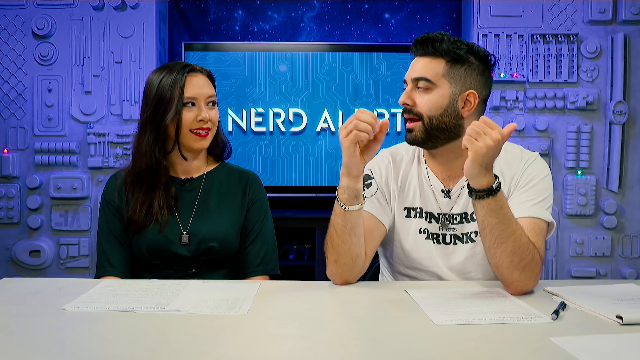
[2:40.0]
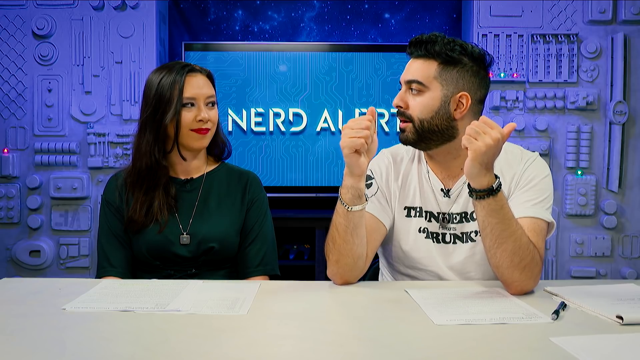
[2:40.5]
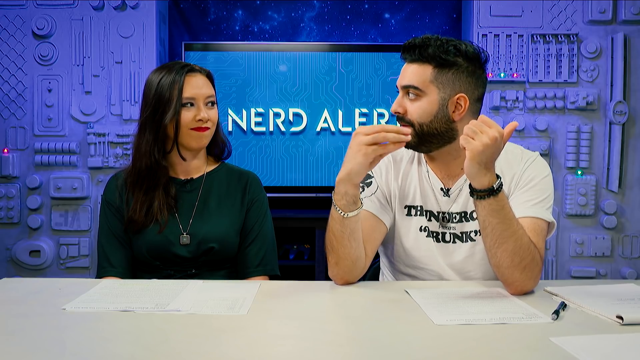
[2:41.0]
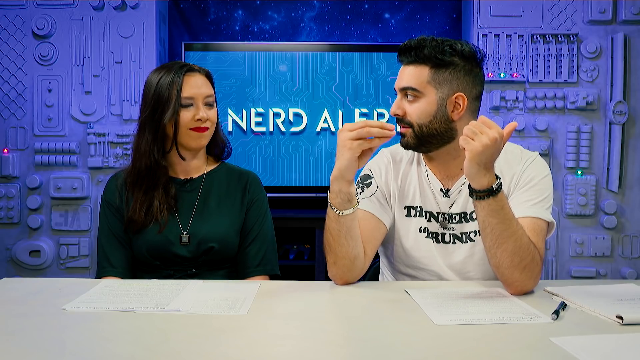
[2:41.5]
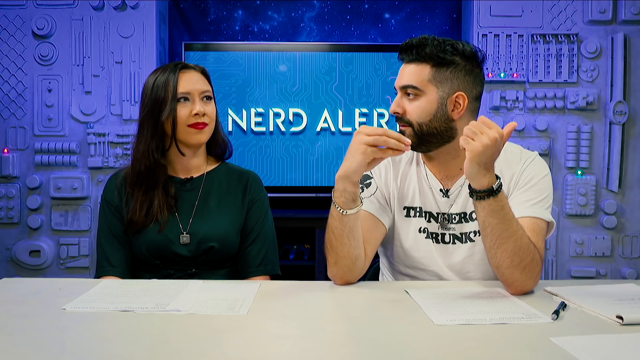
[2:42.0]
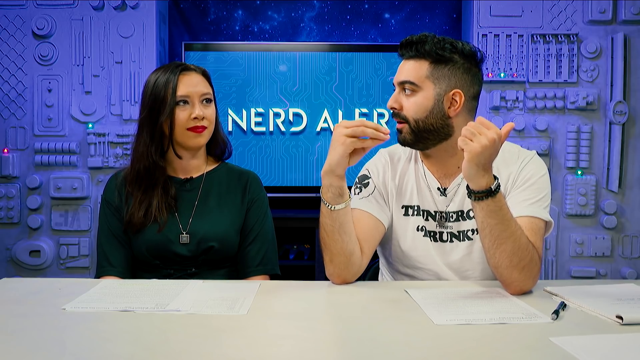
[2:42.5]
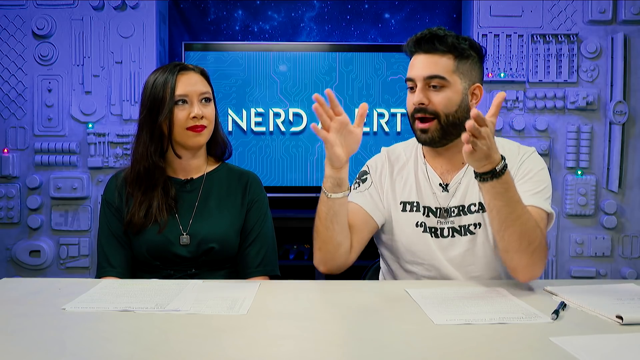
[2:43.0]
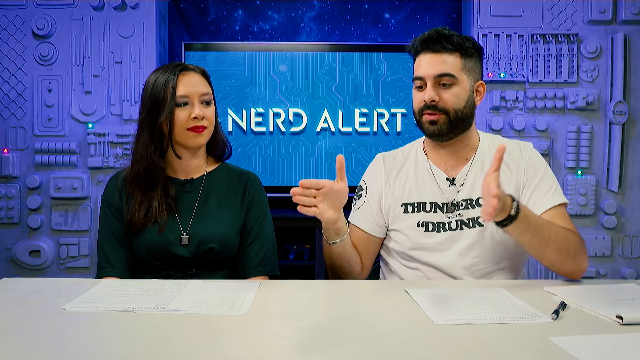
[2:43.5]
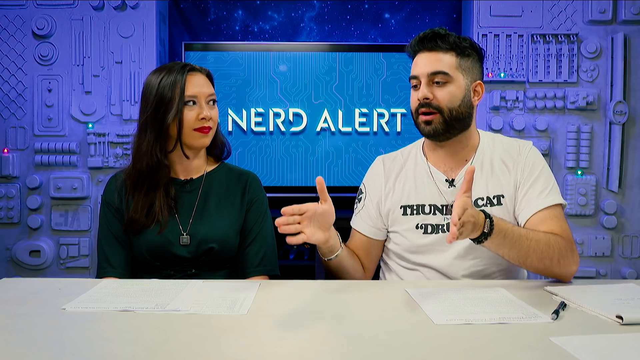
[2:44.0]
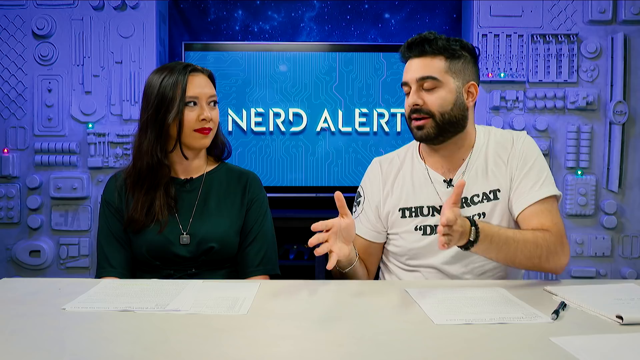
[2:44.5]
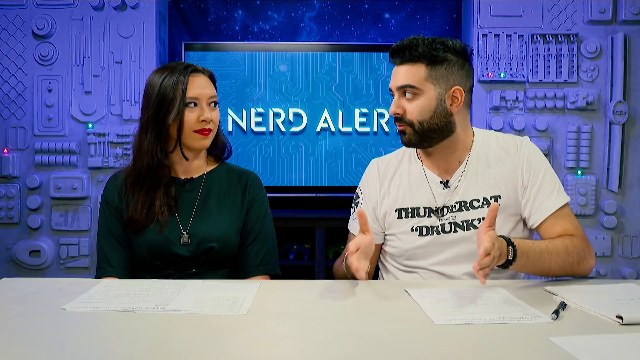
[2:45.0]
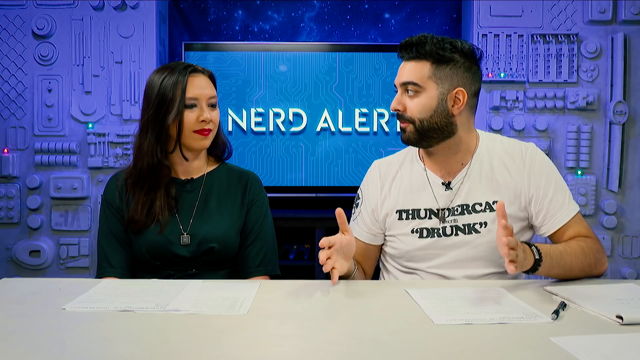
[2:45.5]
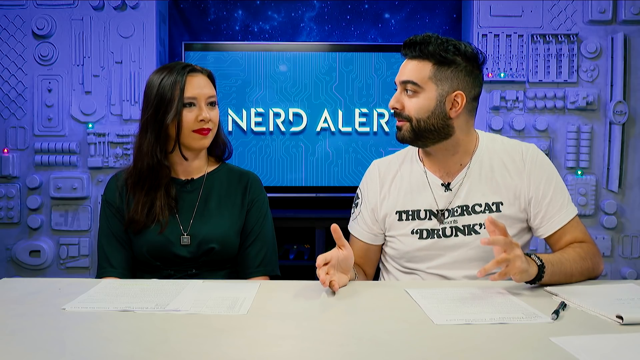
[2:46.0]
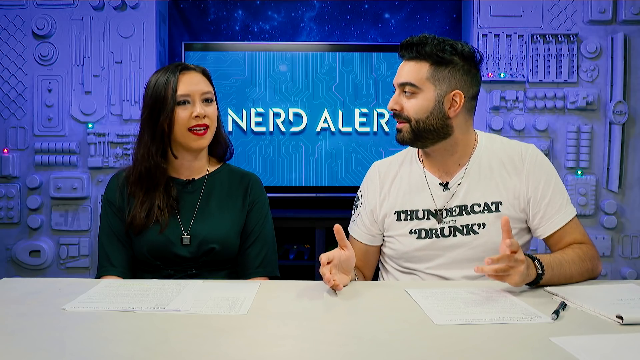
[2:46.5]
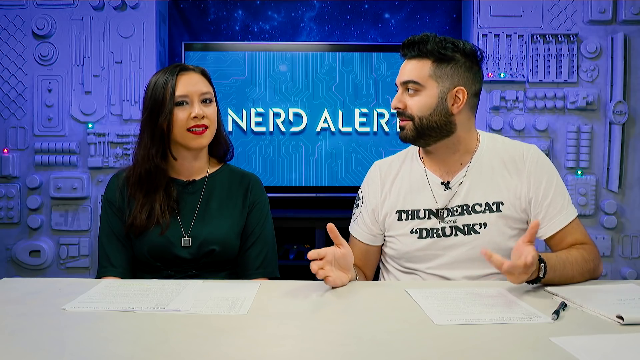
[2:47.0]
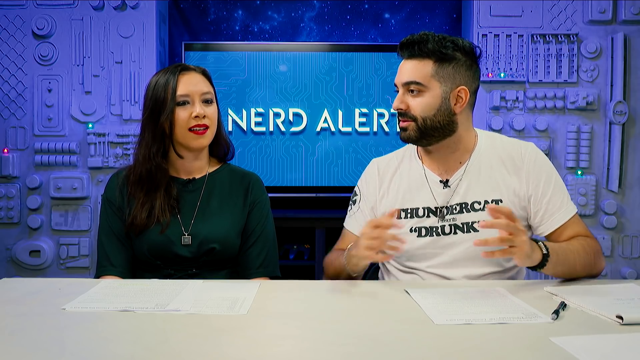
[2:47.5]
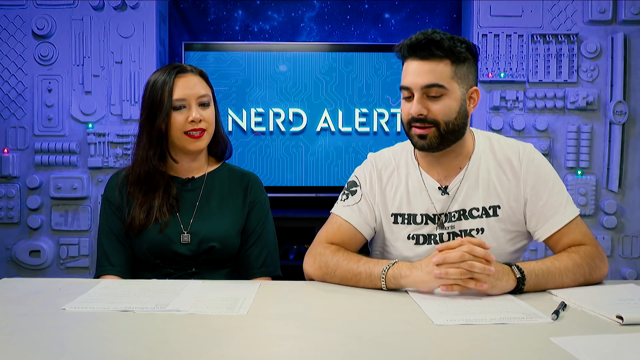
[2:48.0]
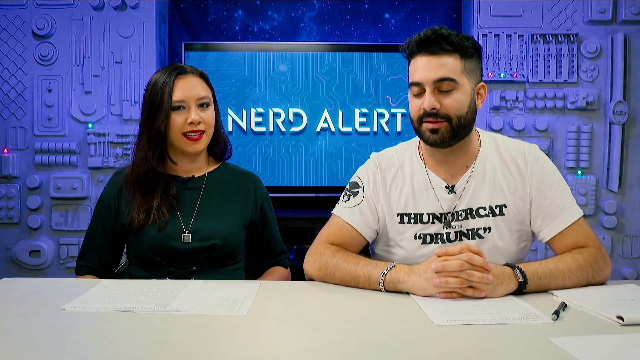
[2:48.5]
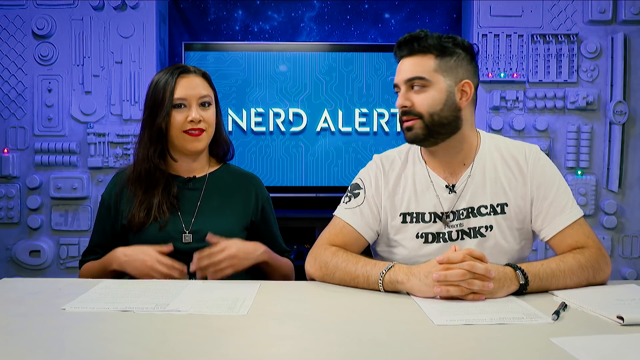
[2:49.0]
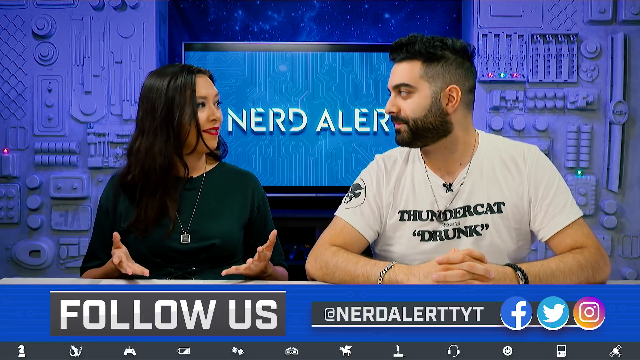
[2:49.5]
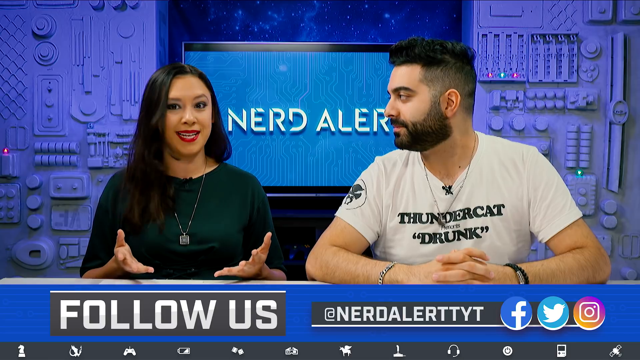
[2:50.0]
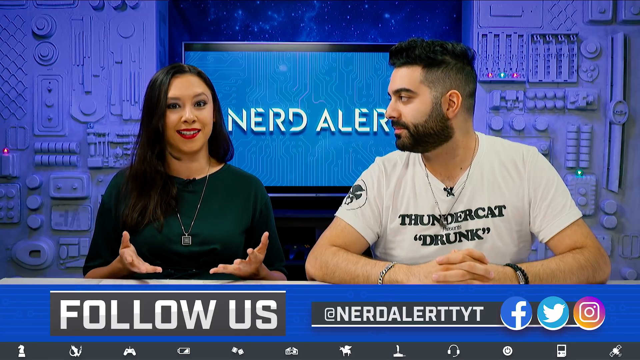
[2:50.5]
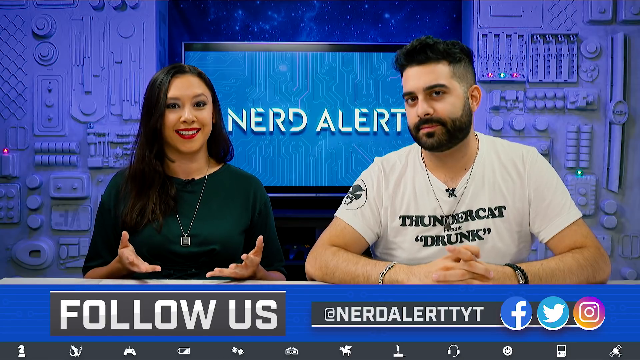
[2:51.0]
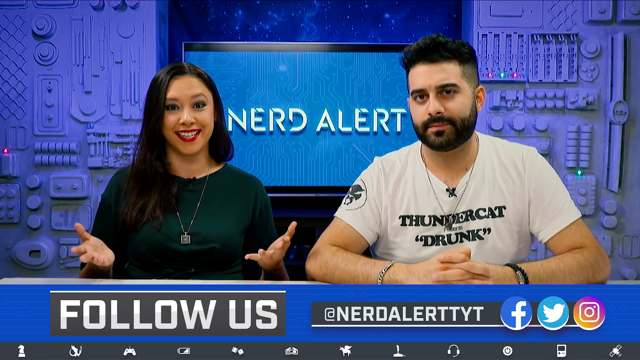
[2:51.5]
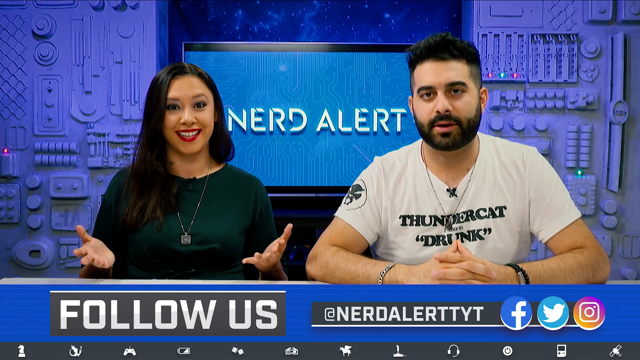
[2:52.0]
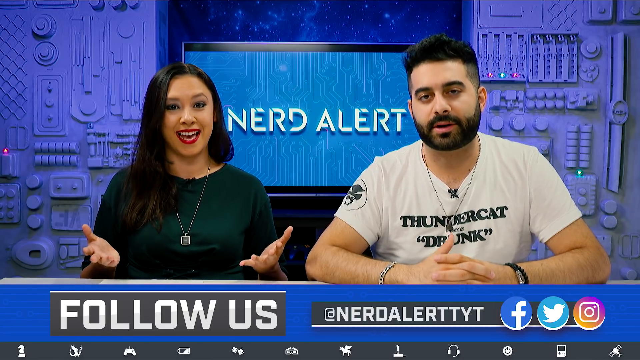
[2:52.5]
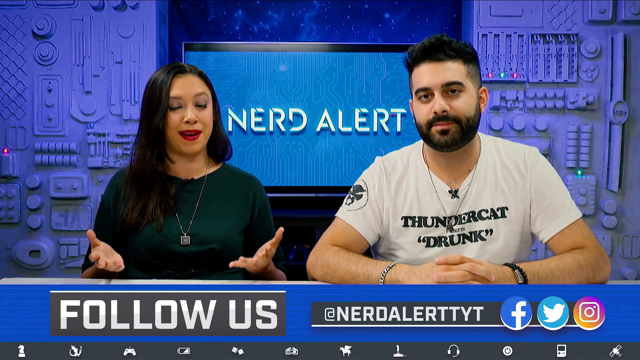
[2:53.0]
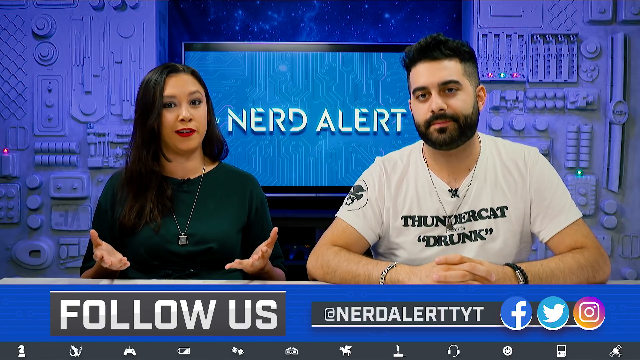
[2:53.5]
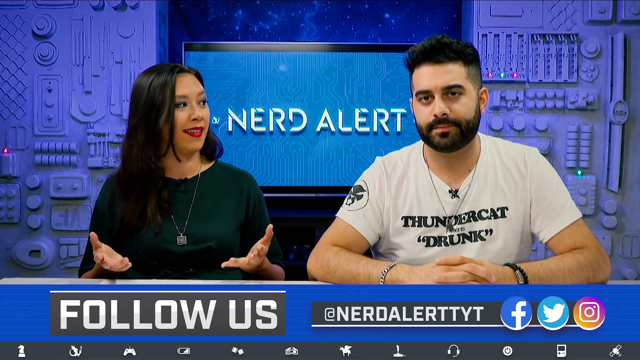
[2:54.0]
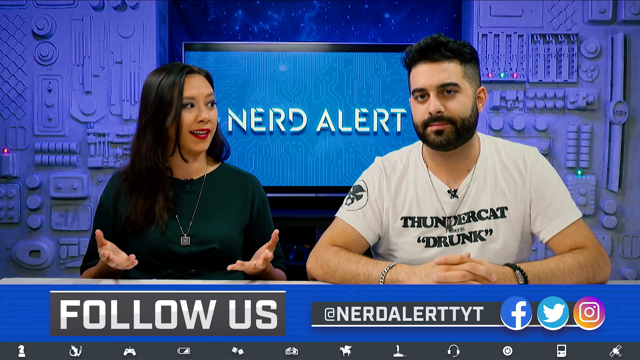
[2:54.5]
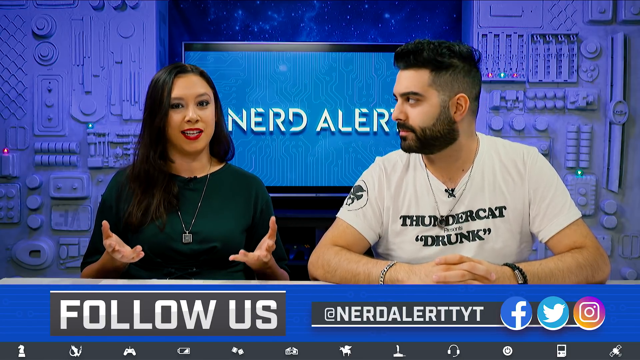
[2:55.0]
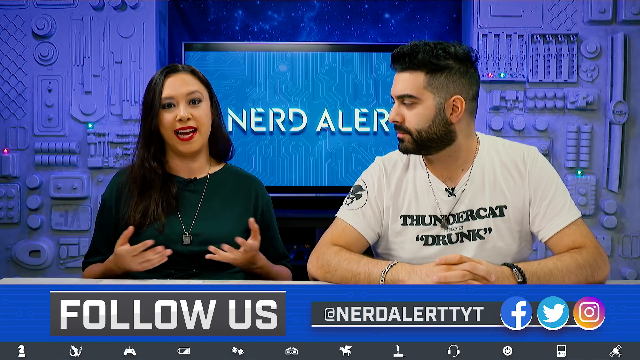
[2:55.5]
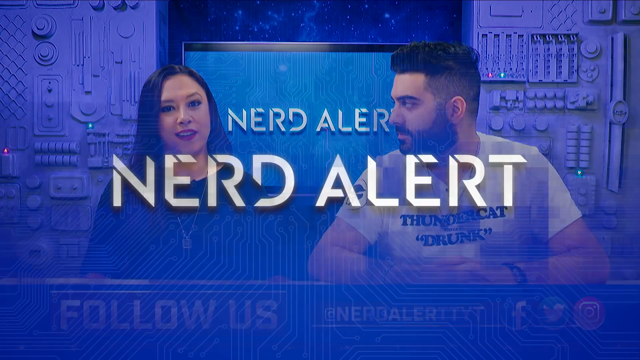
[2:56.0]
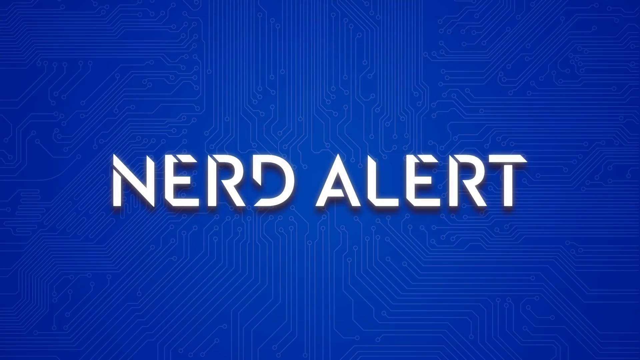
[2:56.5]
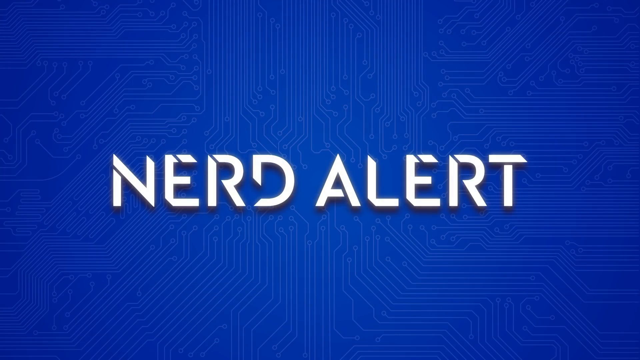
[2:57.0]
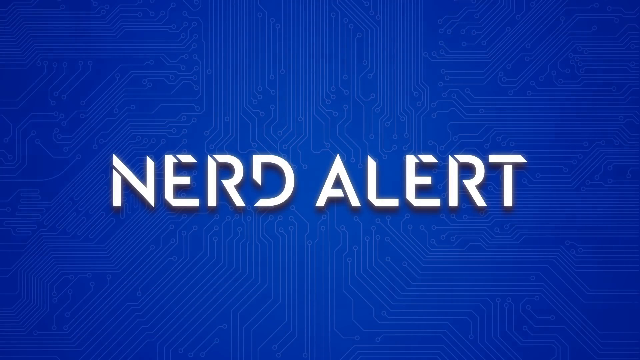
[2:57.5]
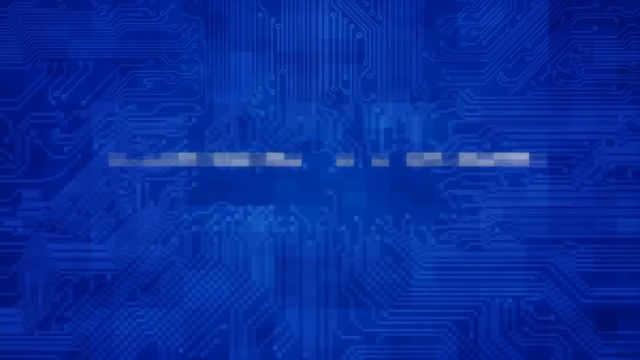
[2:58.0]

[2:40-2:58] A man and a woman sit in a setting that looks cozy and appears to be a newsroom, seemingly having a very nice conversation and getting along well. The woman wears a dark green top, red lipstick and a necklace, and has long hair. White papers are in front of her on a white table; her hands are below the desk, and she lifts them only when explaining something. The man, who has a mohawk hairstyle and wears a white t-shirt, looks at her as she explains, makes facial expressions, looks at the camera and back at her, and speaks while gesturing with his hands. He then puts both hands together on top of the white table in front of them. At the bottom, "FOLLOW US" appears in white capital letters on a dark grey background, and below it is written "at NED Alerts TYT" alongside a Facebook logo, a Twitter logo and an Instagram logo. In the foreground is a screen reading "NERD Alert", and in the background is a white screen with what looks like electrical gadgets and some flashing lights. Underneath there are icons of chairs, a gaming controller, a battery, horse racing, a microphone and a telephone.